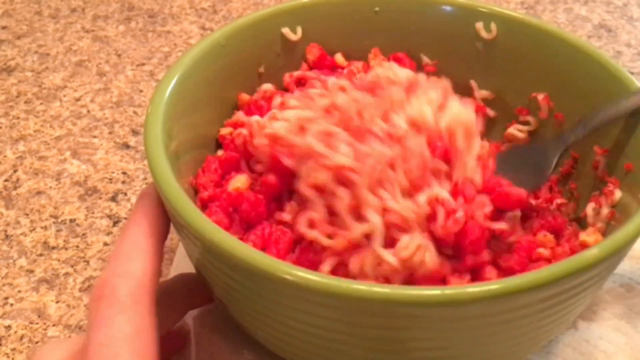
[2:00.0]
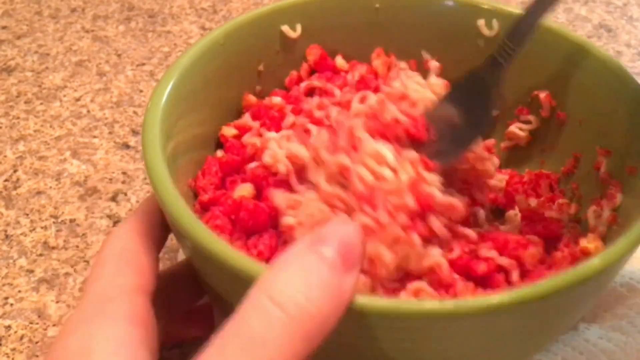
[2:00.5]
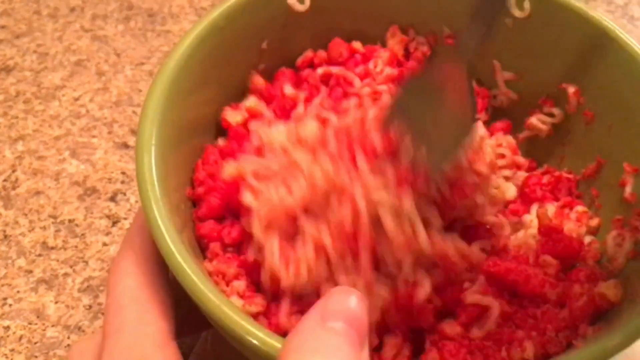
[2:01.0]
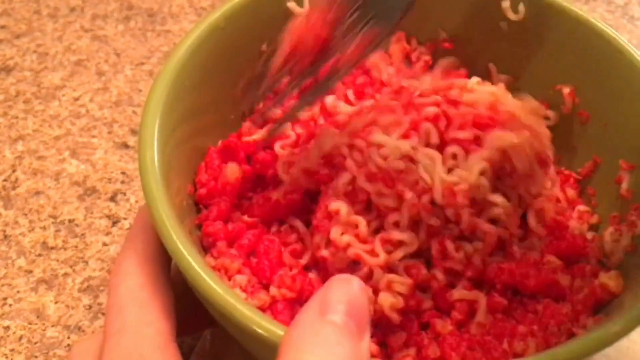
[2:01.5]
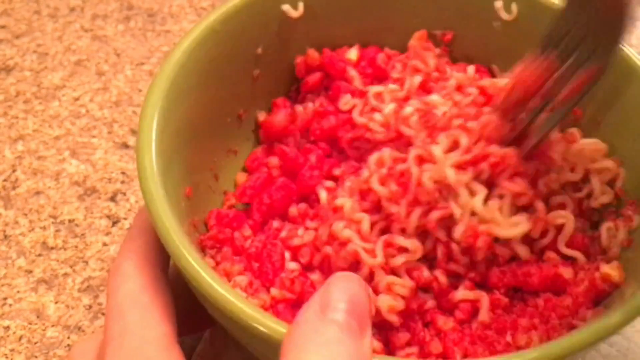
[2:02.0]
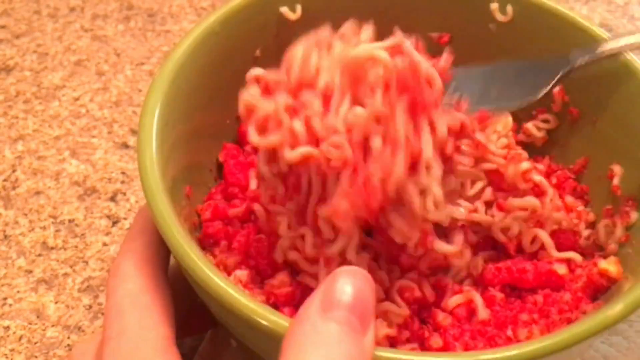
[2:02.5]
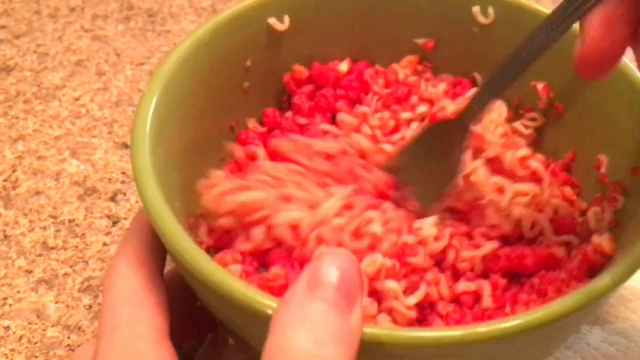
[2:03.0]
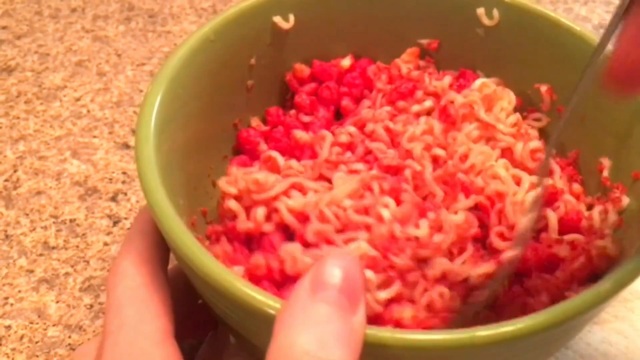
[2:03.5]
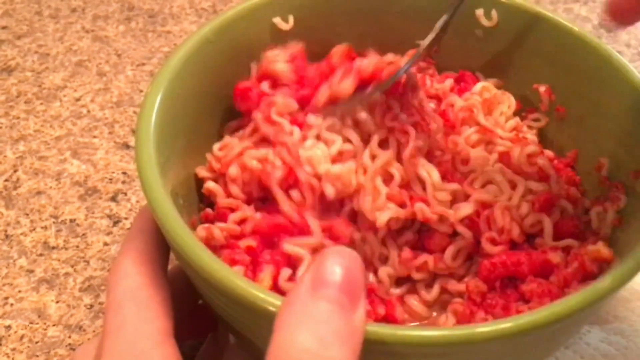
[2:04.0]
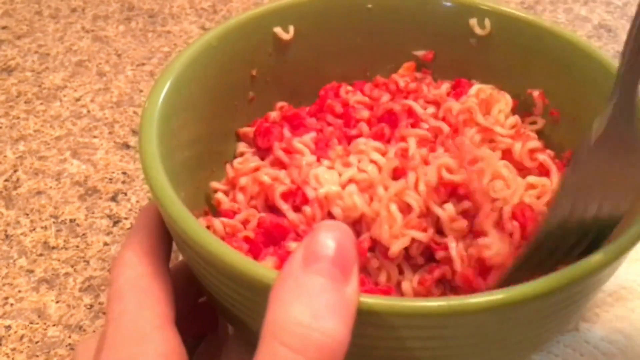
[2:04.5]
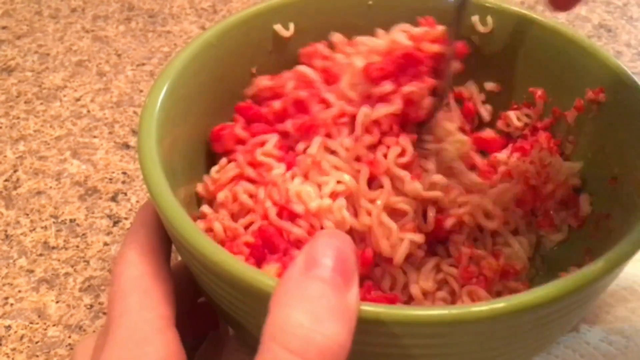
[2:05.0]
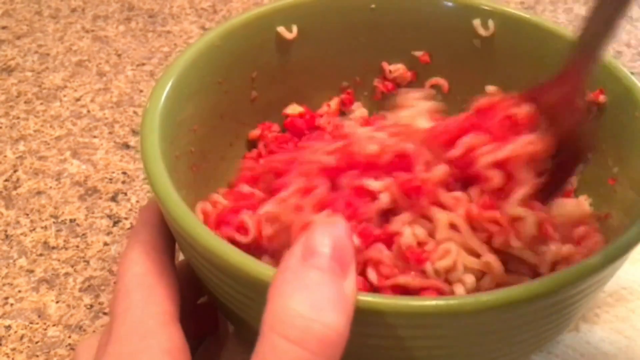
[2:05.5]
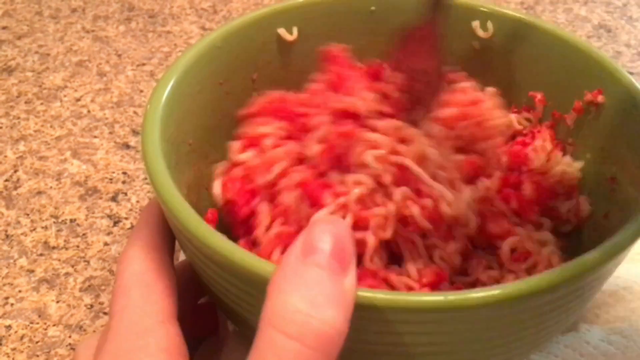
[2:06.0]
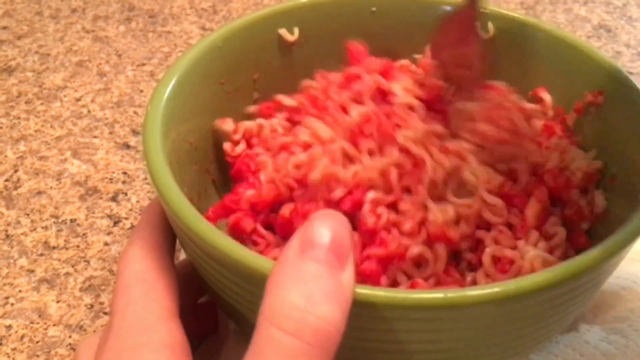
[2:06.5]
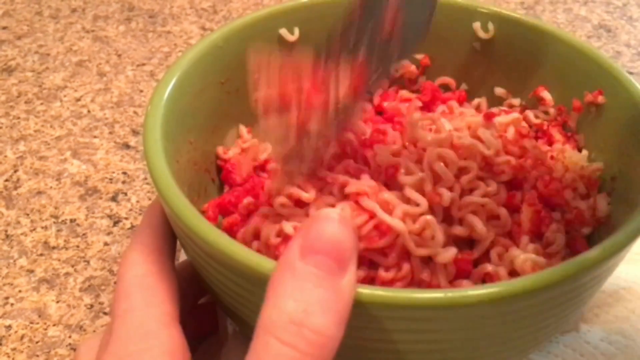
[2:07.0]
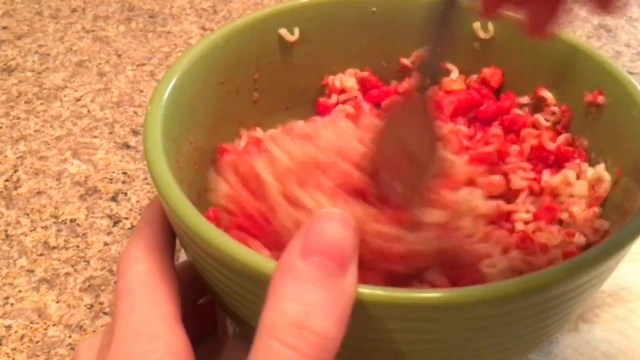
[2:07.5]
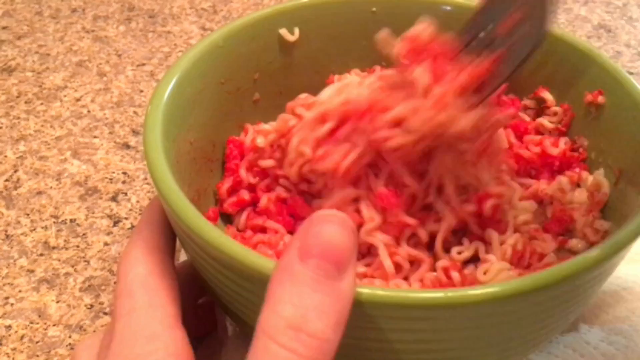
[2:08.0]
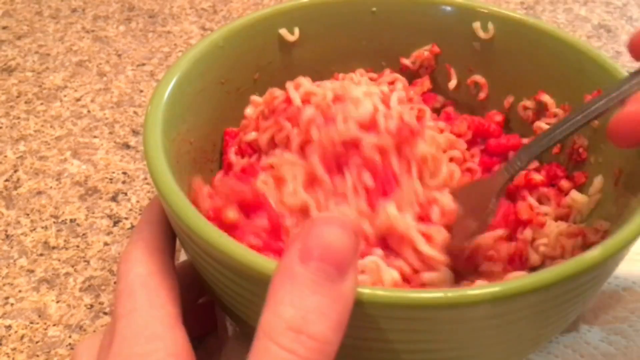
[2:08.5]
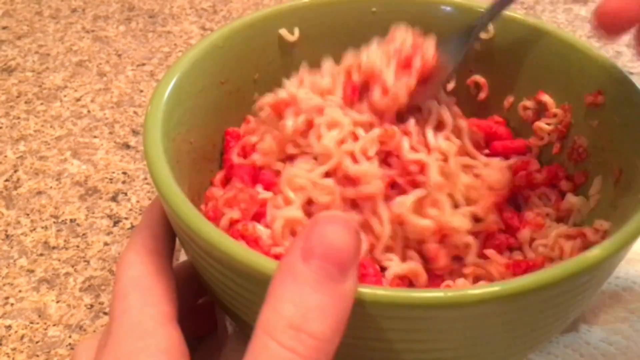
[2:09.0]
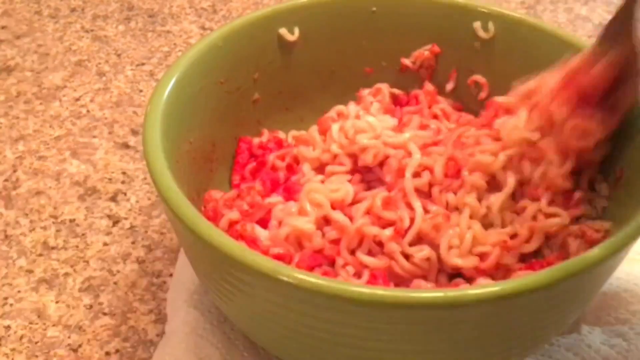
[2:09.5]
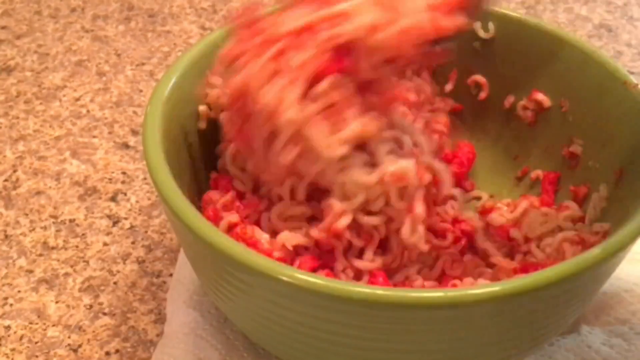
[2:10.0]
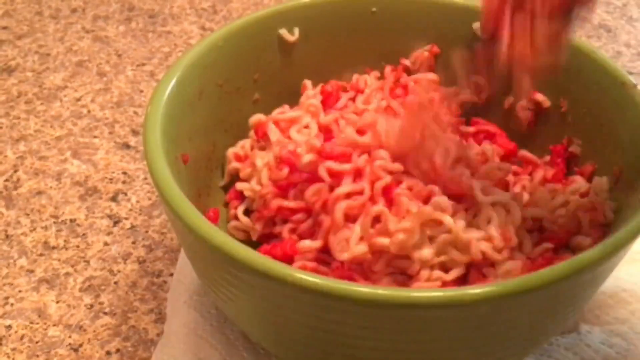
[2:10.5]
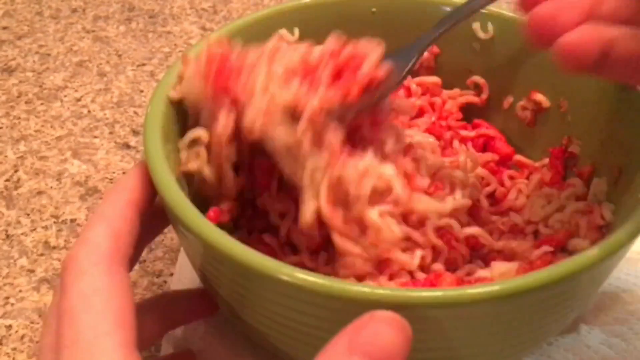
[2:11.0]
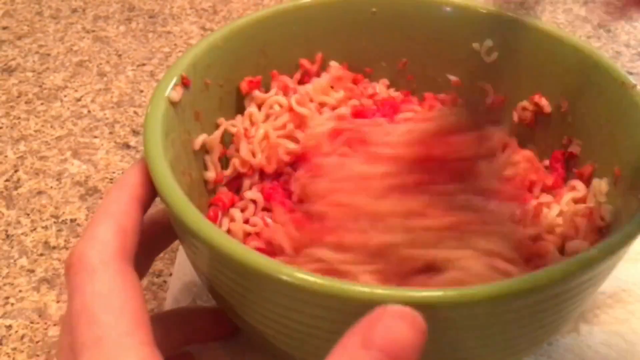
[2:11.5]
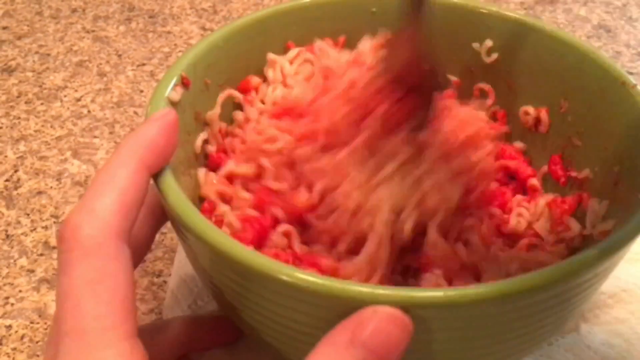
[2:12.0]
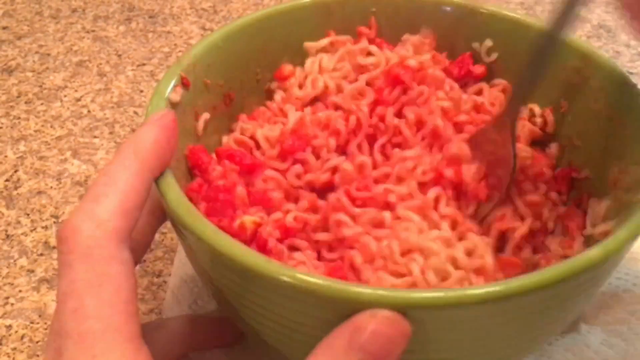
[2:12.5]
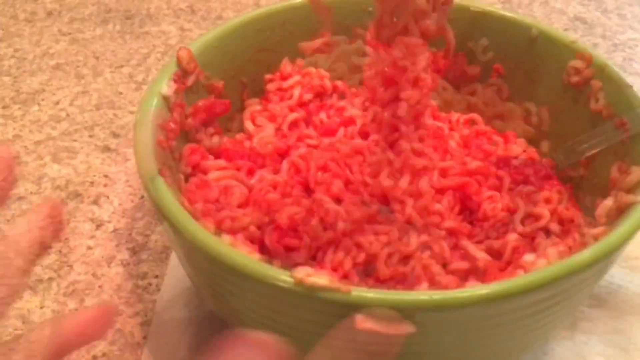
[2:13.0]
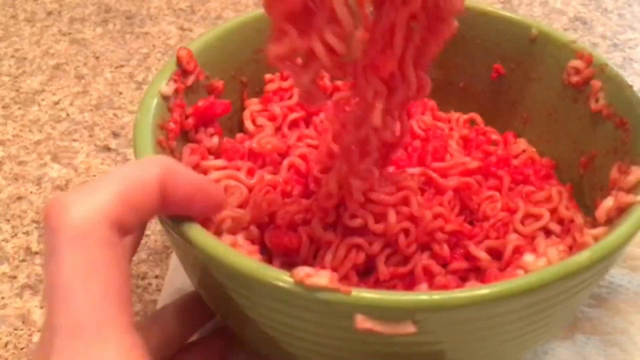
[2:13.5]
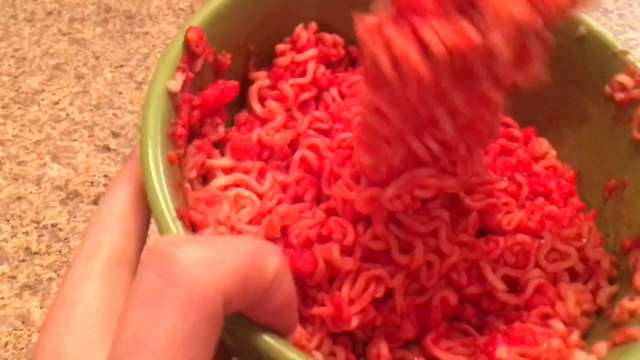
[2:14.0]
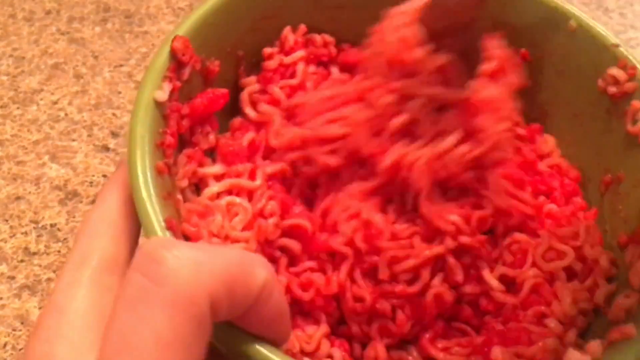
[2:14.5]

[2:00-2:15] The green ceramic cereal bowl contains the ramen noodles and Flaming Hot Cheetos combined. The person holds the bowl in her left hand while mixing the contents with her right hand, mixing top to bottom, left to right and in circles until it is thoroughly mixed. A shot of the final product in the bowl follows; it appears bright red and appears to be all mixed up. The fork is pulled up to show the noodles and the contents of the bowl. The bowl is still on top of the white paper towel.